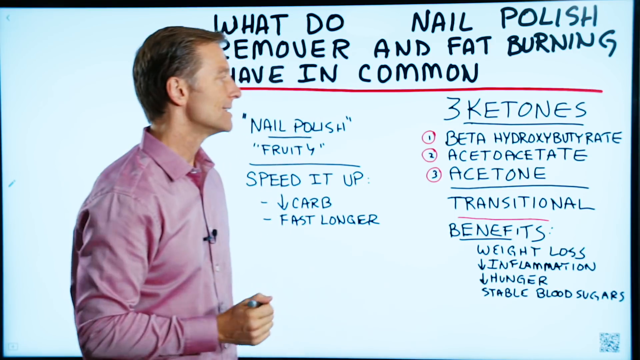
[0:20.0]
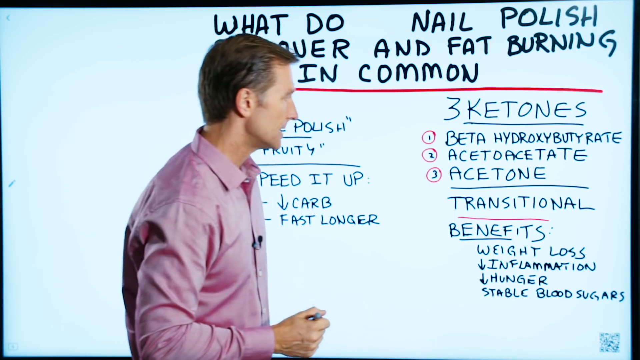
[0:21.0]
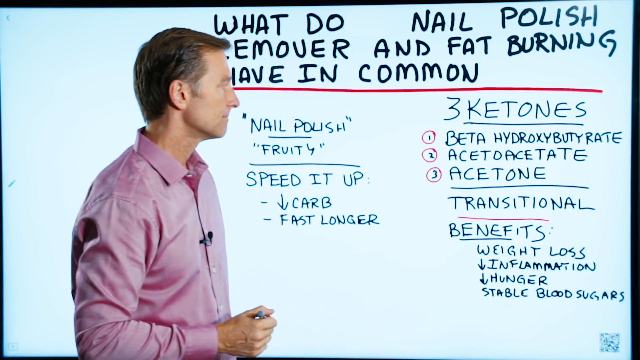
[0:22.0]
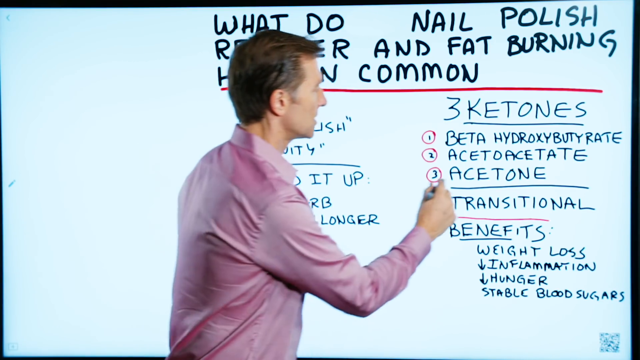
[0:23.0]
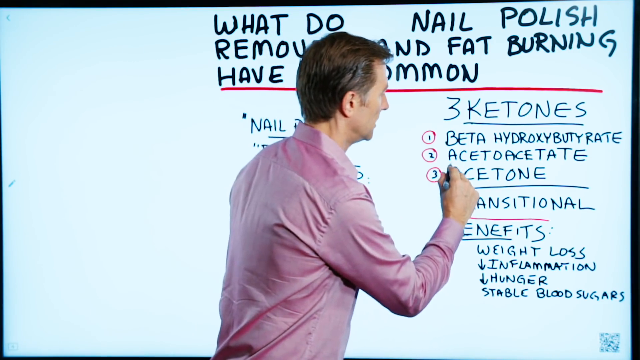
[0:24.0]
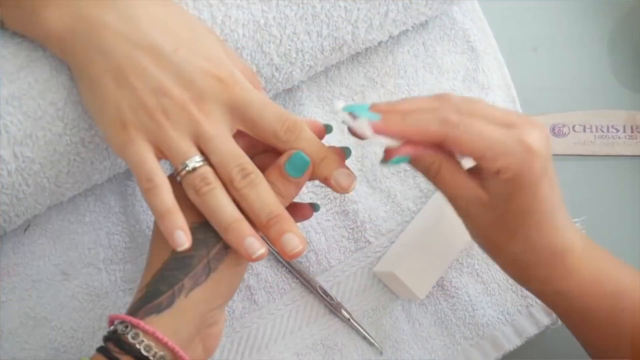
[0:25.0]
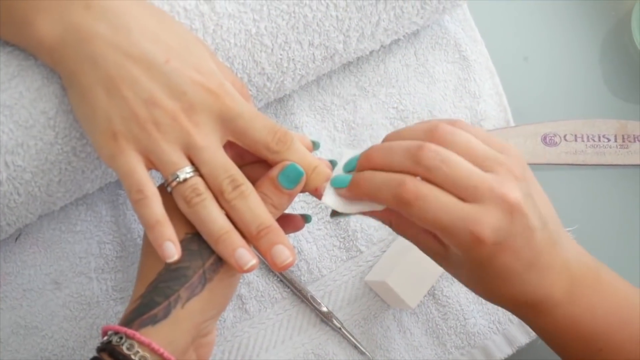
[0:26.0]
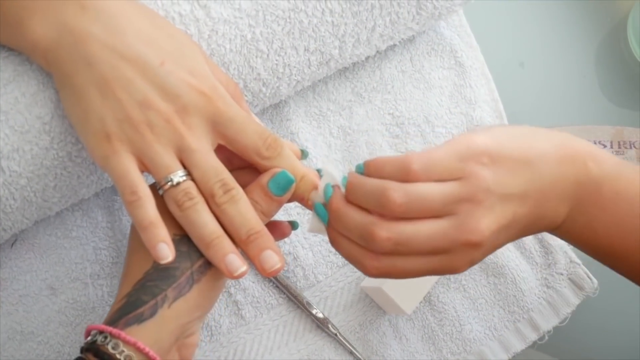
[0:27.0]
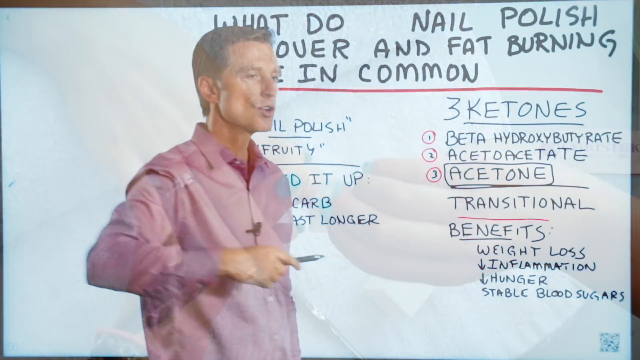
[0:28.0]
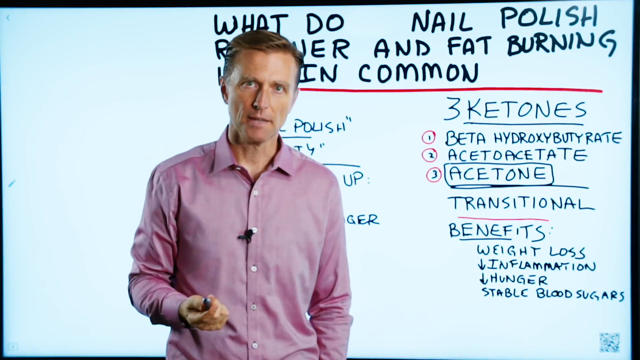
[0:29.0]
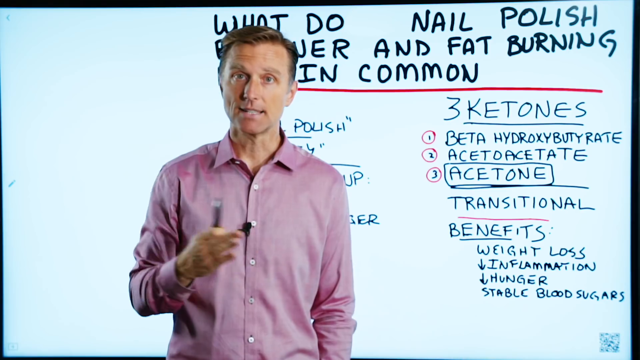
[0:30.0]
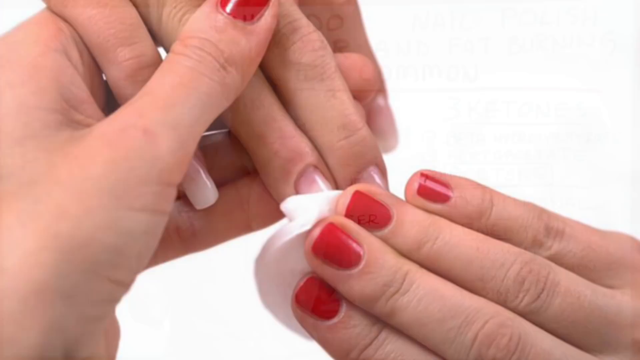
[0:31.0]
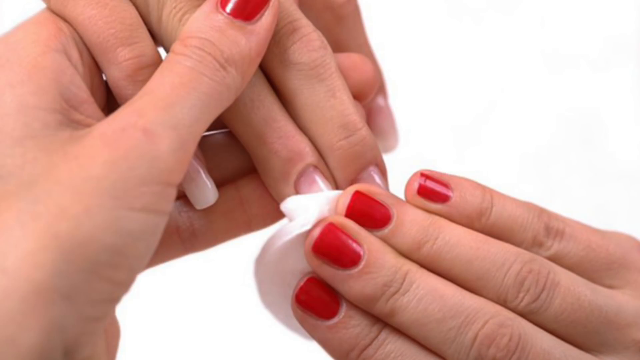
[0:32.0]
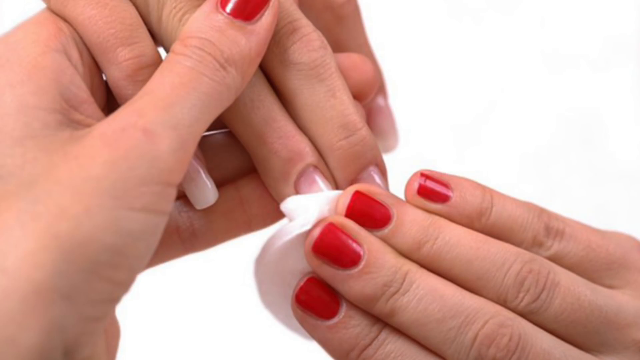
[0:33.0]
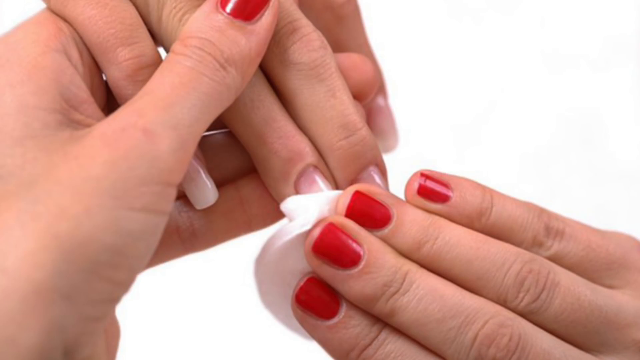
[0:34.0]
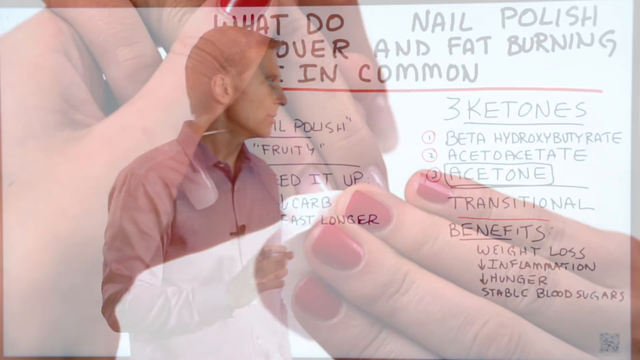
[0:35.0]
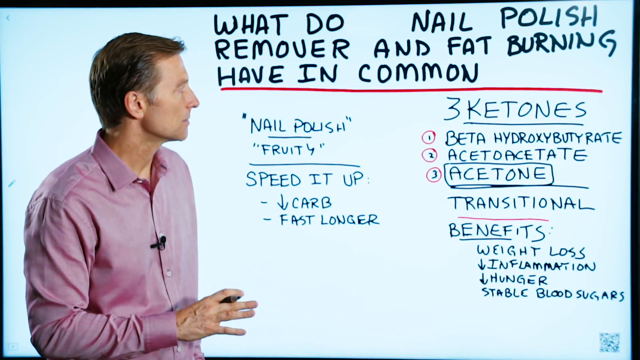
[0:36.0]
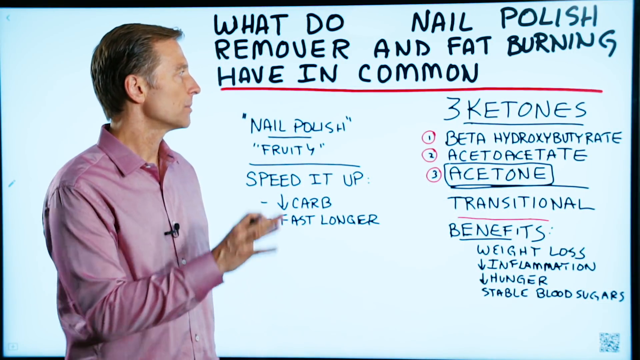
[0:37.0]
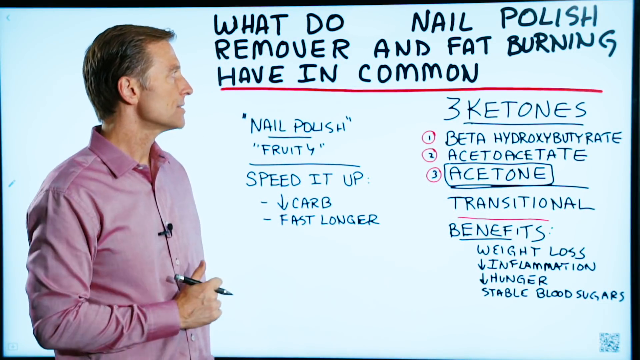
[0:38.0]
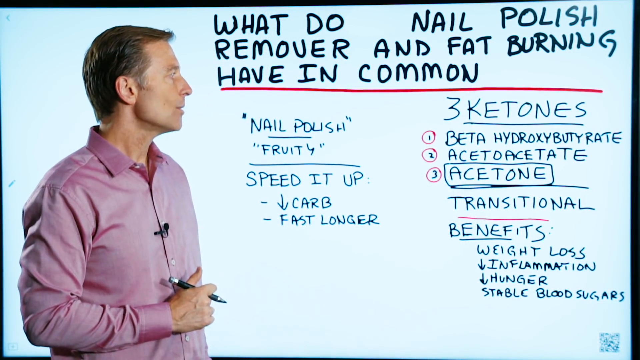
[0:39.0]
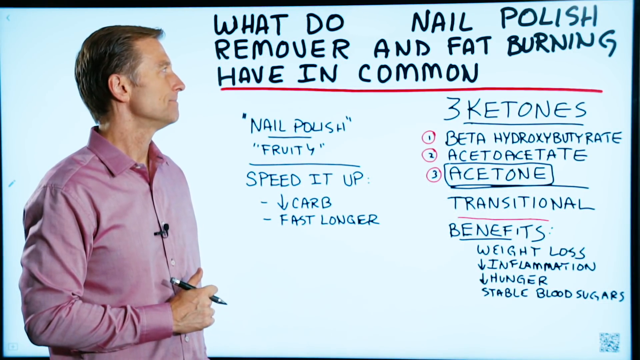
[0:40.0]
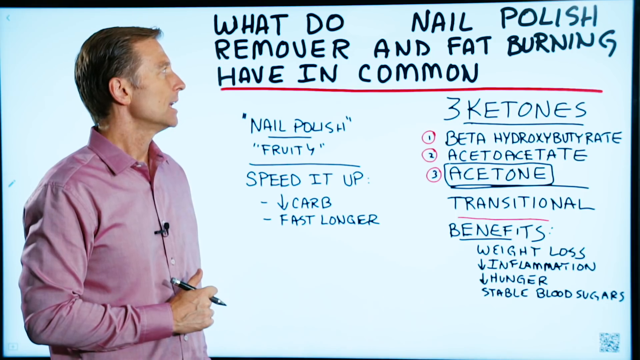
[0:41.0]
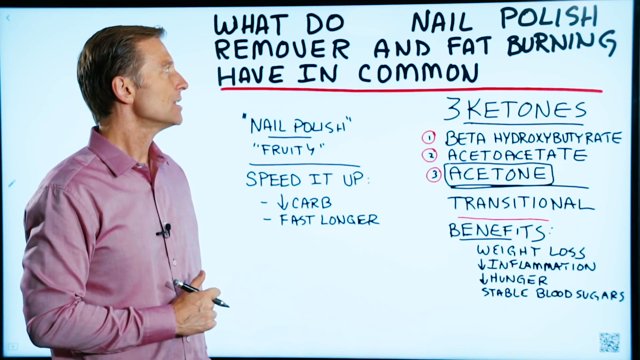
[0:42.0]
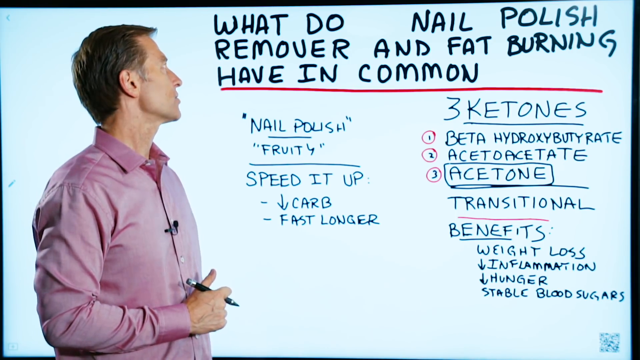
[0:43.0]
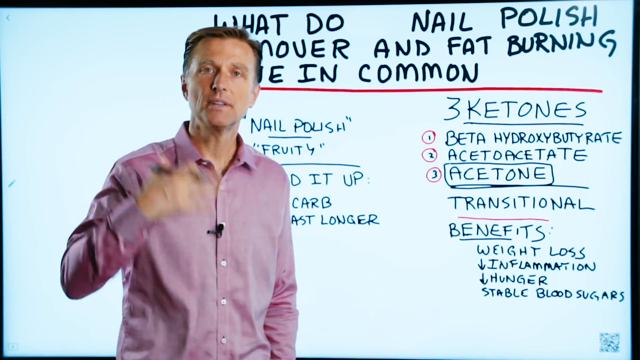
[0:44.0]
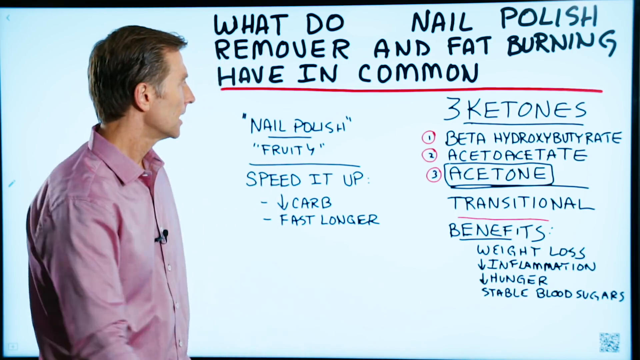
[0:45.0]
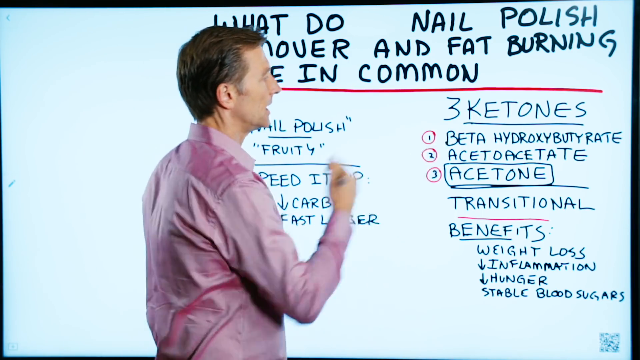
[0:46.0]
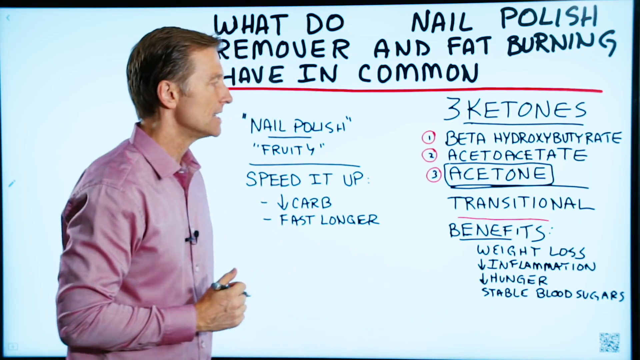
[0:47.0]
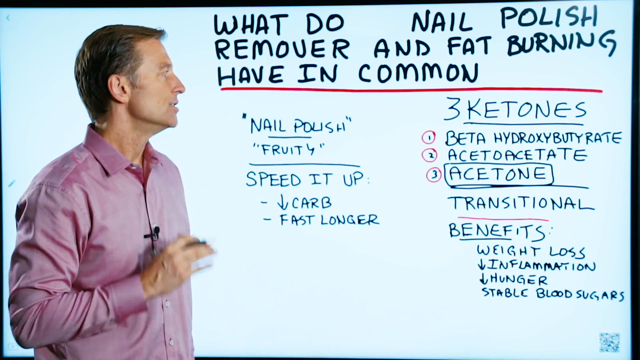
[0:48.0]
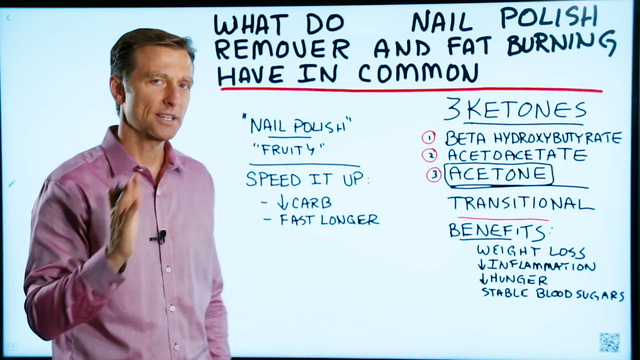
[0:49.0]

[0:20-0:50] The man keeps going back and forth between the different points on the whiteboard, then underlines "acetoacetate". As he underlines it, the video switches to a very close-up shot of someone removing nail polish from another person's hand. The person wiping off the polish wears bright teal nail polish and has a feather tattoo on their left hand; towels are in the background, and the person whose nail is being cleaned wears a bright, large wedding ring on their ring finger. The video cuts back to the presenter addressing the camera, then switches to a still, unmoving image of a different person cleaning a nail: this time the person doing the work has red fingernail polish, and no wedding ring is visible on the finger. It cuts back to the presenter, who faces the board with his right arm raised, using it for emphasis as he goes back and forth.